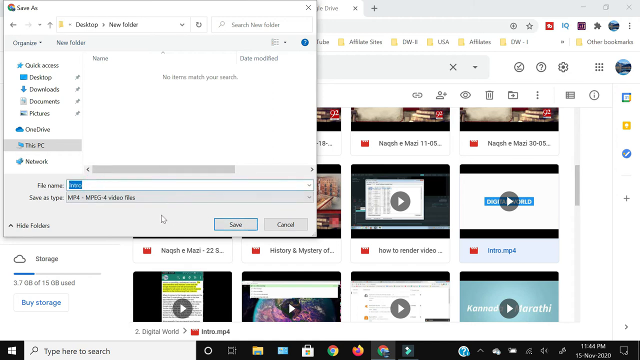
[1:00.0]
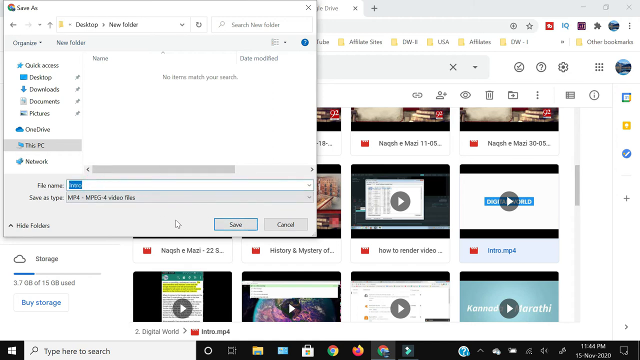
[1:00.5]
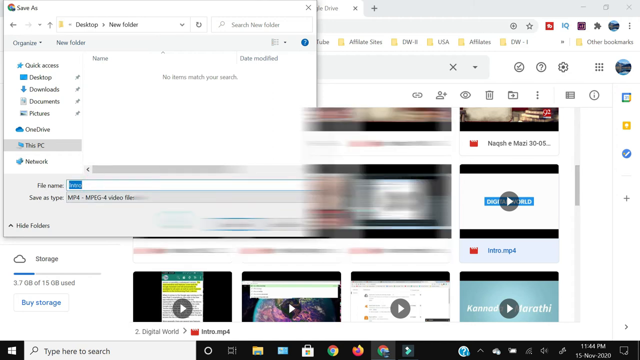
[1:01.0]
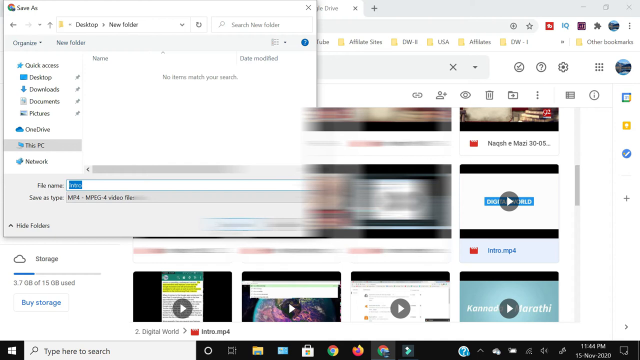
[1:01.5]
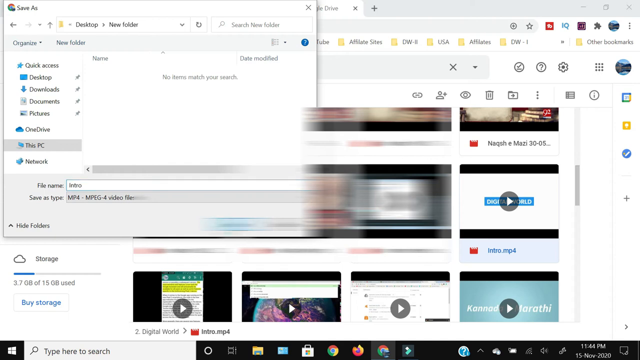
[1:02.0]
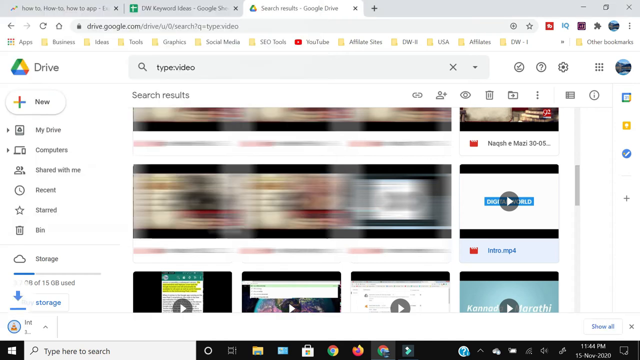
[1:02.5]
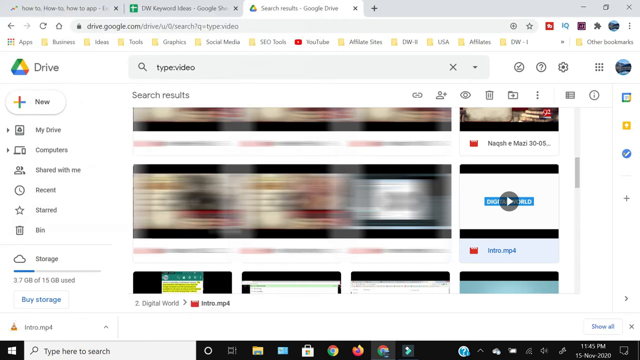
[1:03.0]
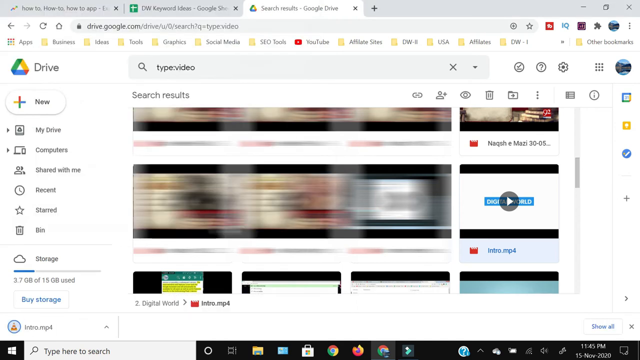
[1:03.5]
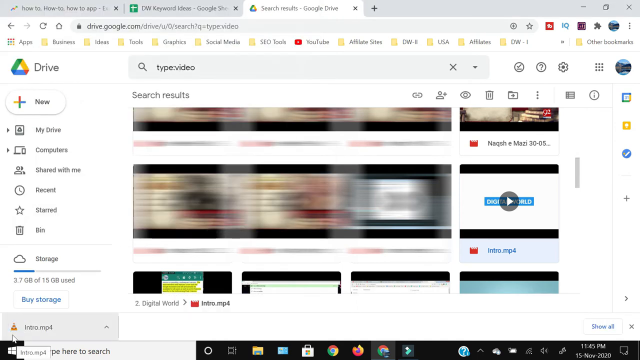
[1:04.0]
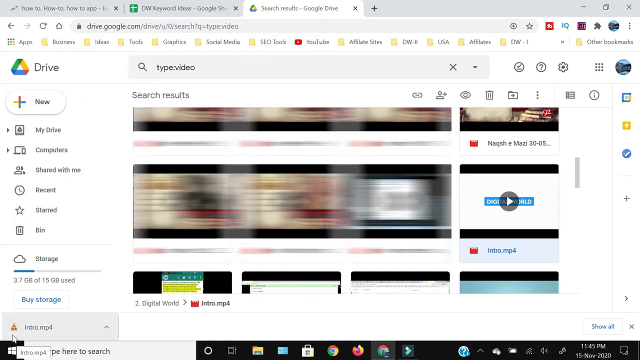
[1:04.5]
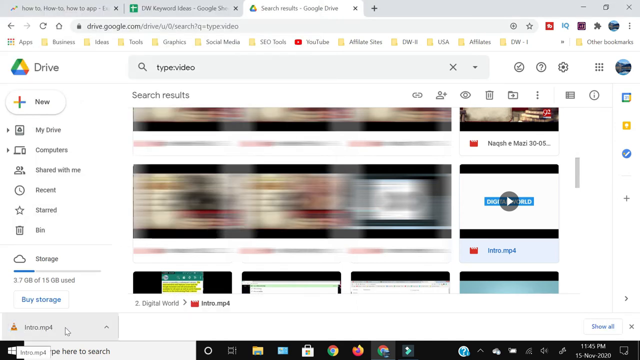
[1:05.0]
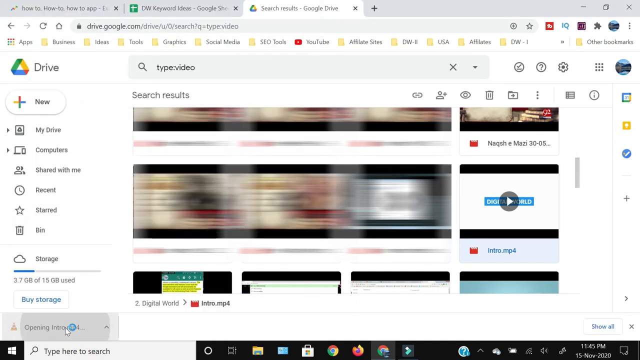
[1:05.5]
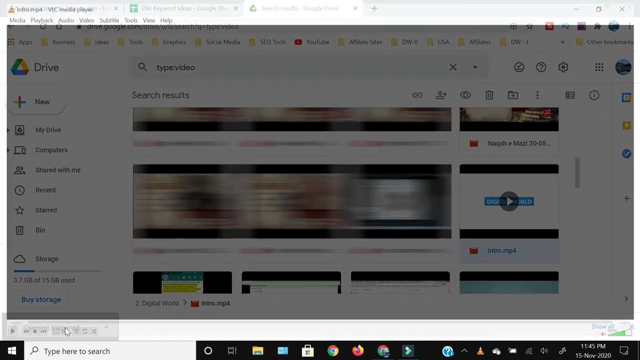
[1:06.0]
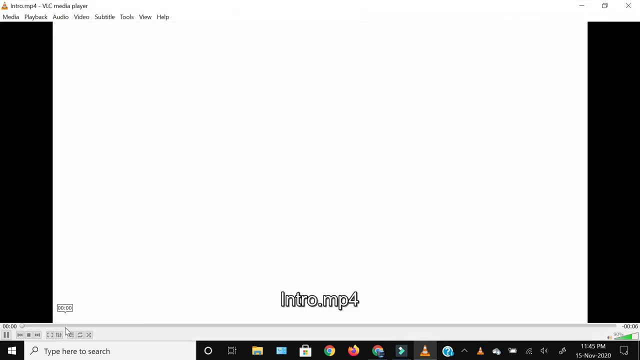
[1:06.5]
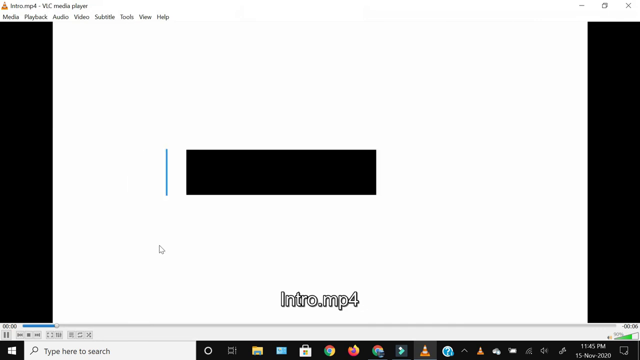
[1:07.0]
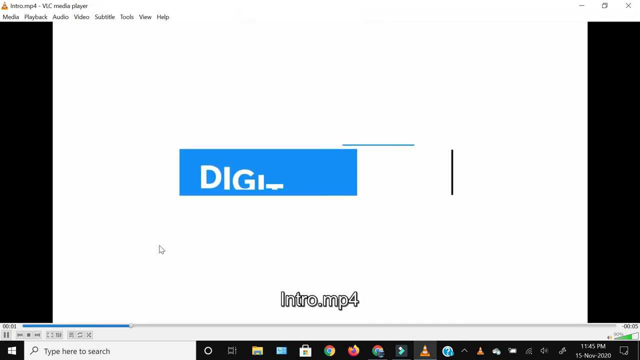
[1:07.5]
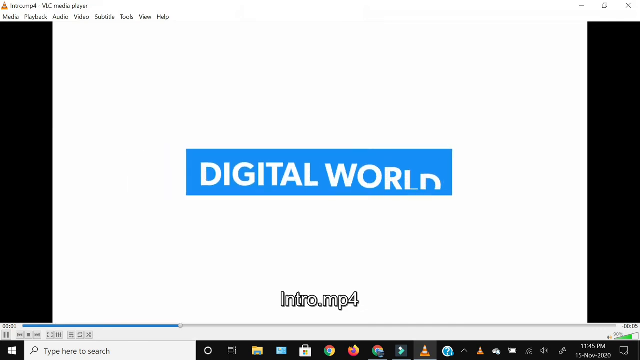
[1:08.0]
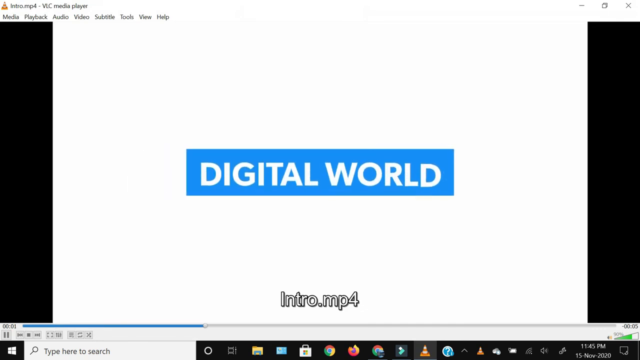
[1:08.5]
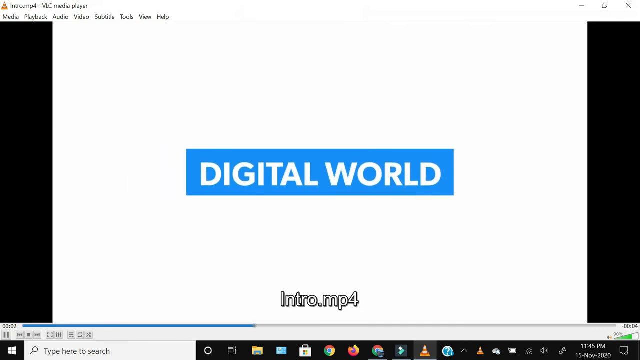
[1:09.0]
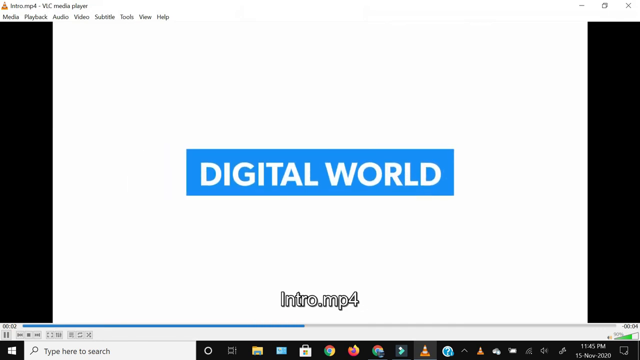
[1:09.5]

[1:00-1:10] A file called intro is being saved to "this PC" as an mp4, with the menu pulled down. It looks like the file is saved, and then it is opened, showing "digital world intro.mp4."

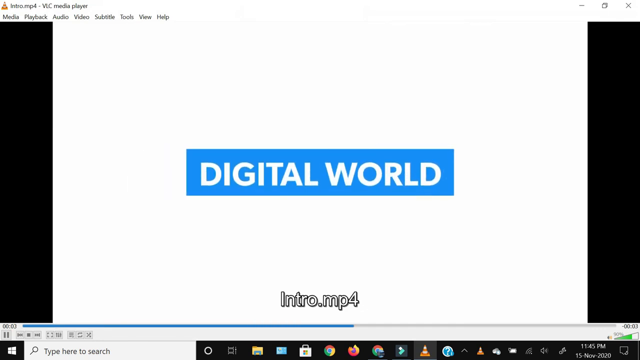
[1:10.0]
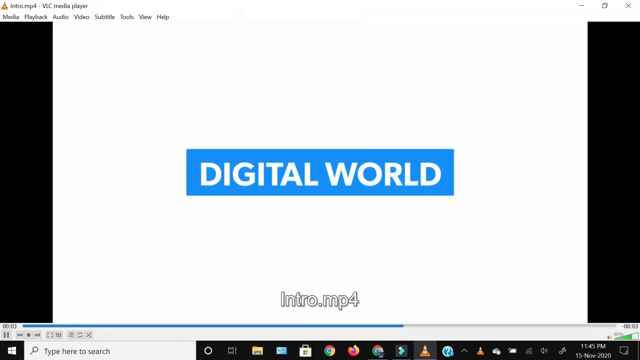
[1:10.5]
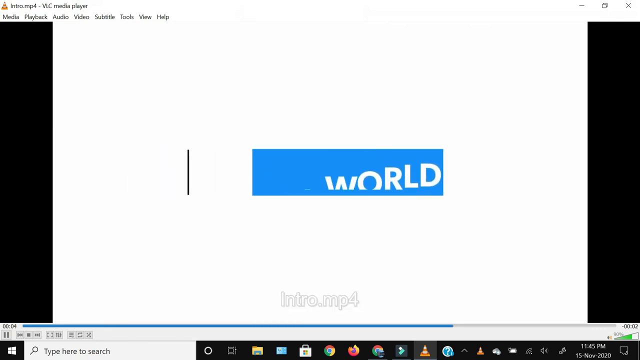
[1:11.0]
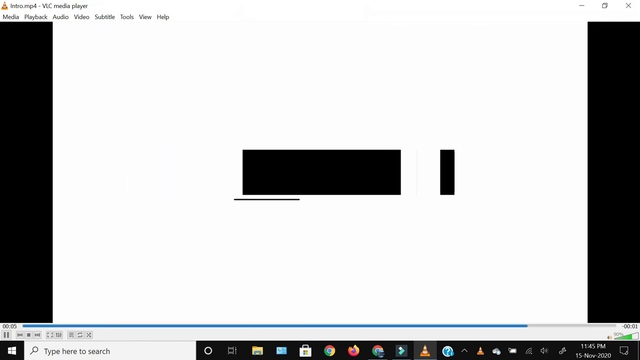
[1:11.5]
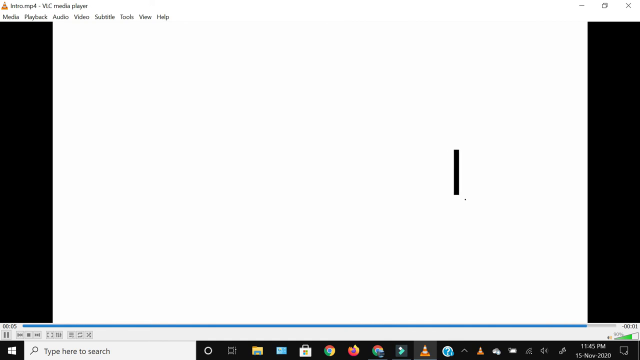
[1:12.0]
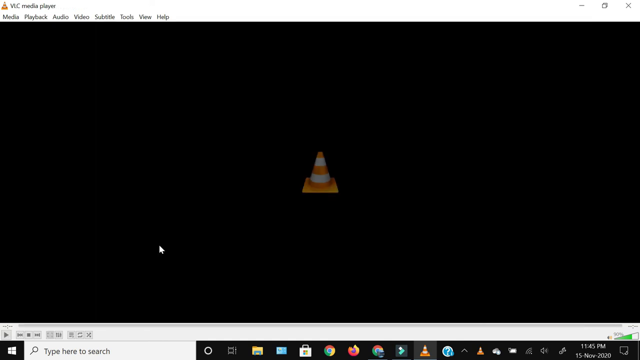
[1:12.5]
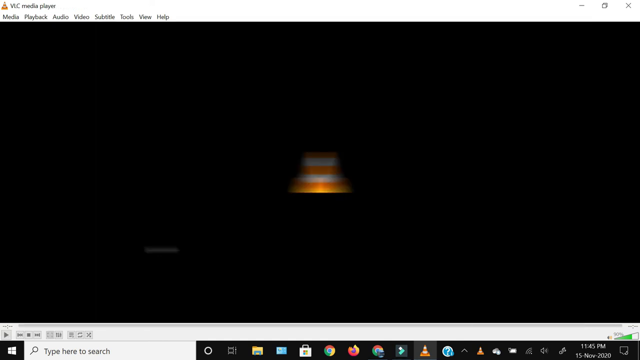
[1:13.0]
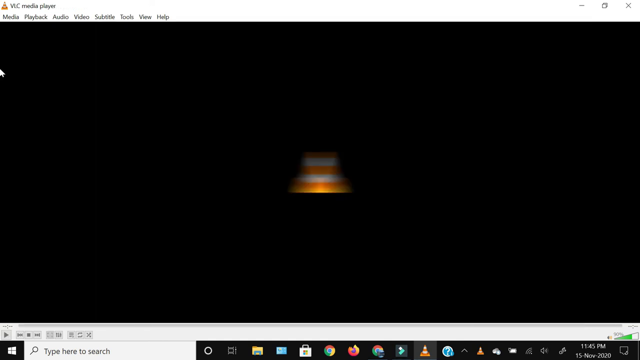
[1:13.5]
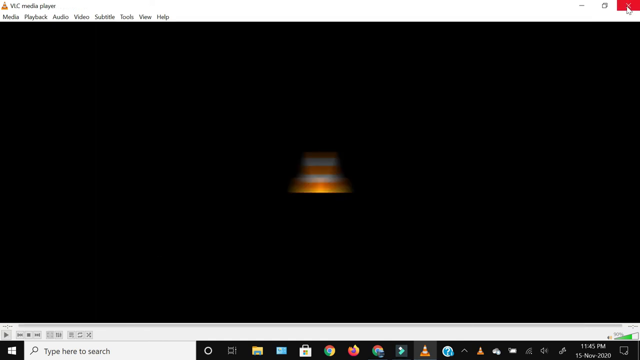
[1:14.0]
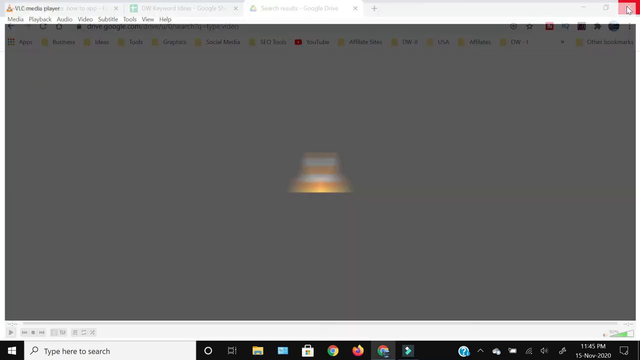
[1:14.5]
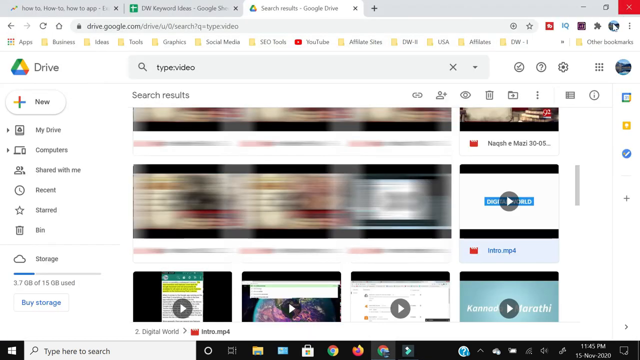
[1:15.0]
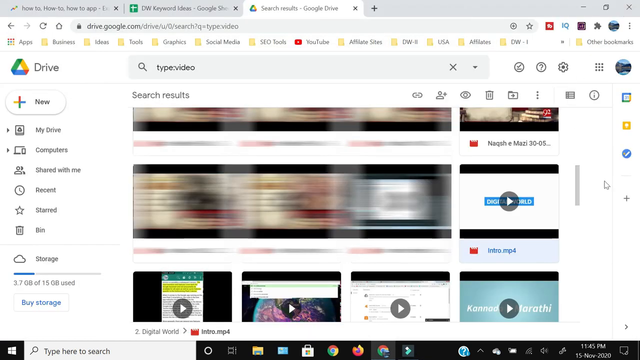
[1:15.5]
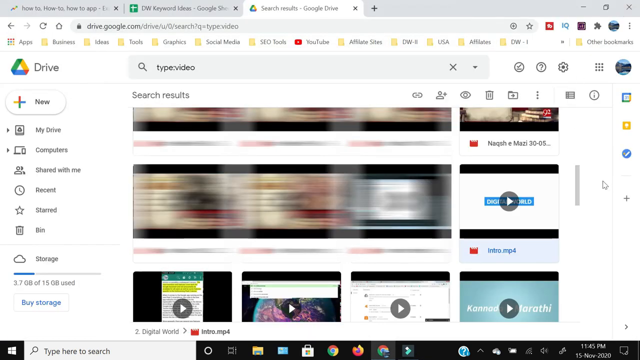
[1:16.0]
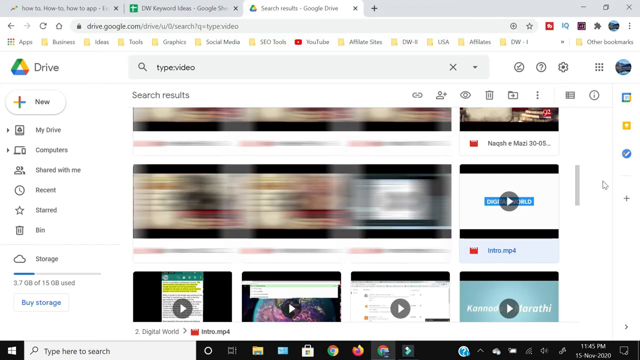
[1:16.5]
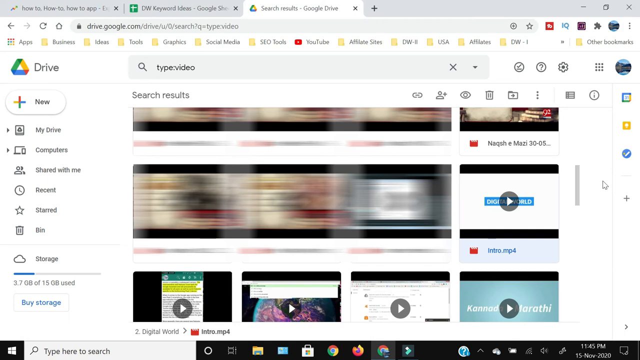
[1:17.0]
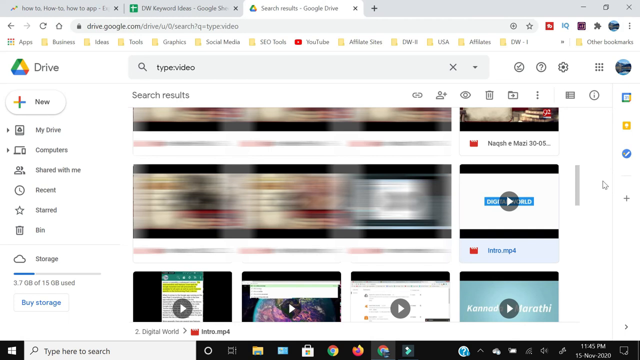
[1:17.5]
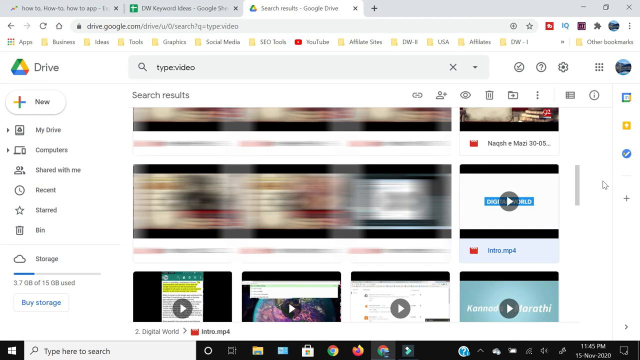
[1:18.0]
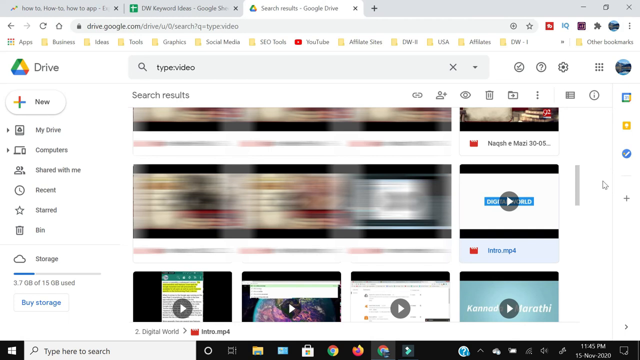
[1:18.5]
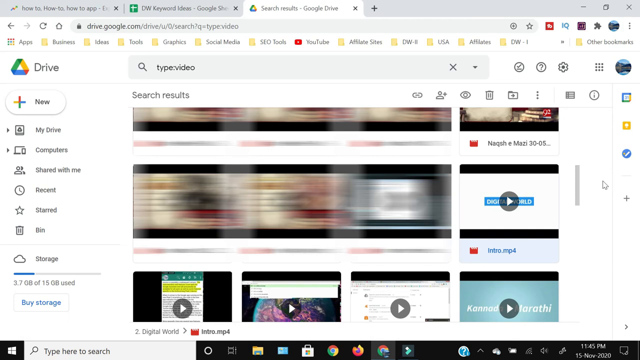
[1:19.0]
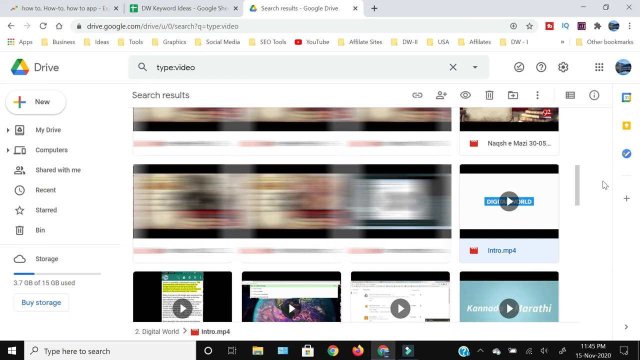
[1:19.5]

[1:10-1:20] The downloaded file called intro is opened, showing "digital world intro.mp4." An orange and white traffic cone icon appears and then immediately closes.